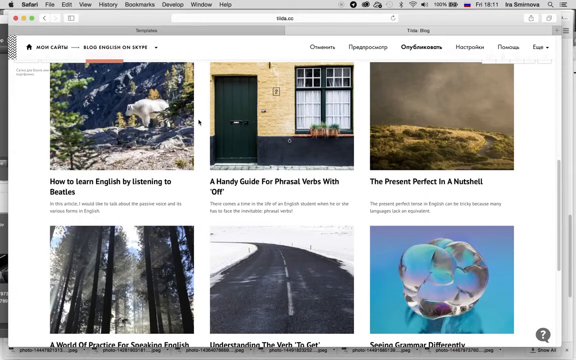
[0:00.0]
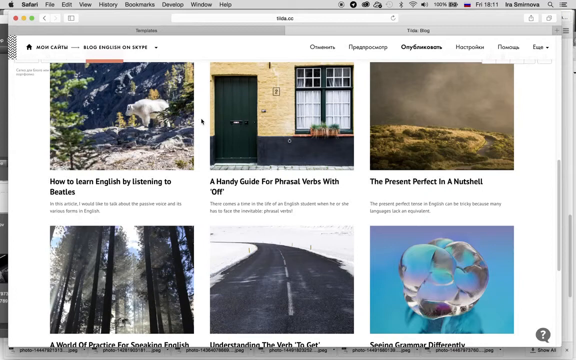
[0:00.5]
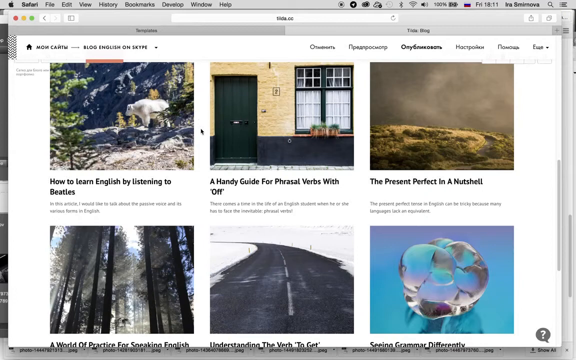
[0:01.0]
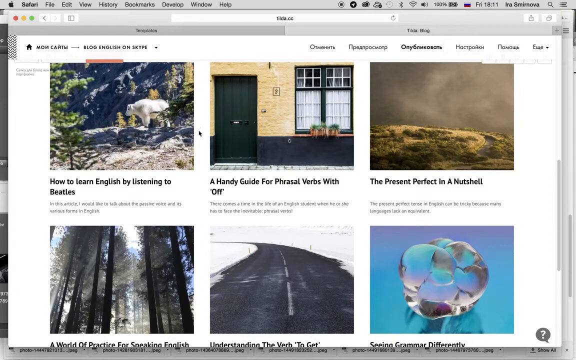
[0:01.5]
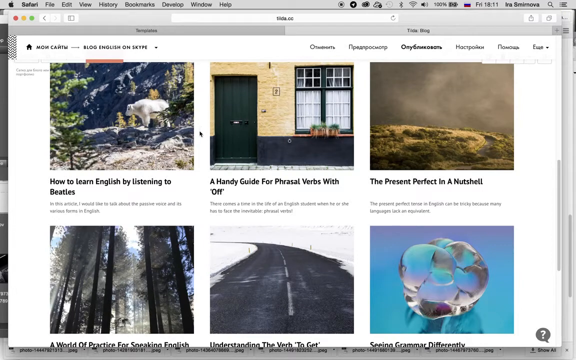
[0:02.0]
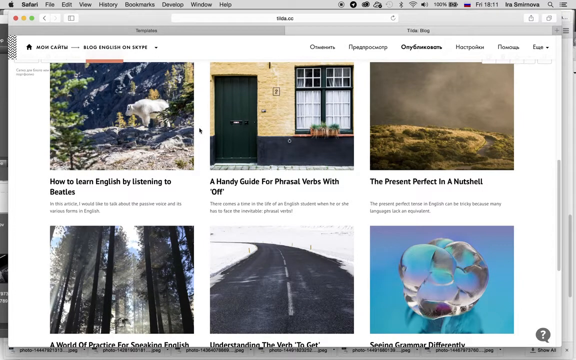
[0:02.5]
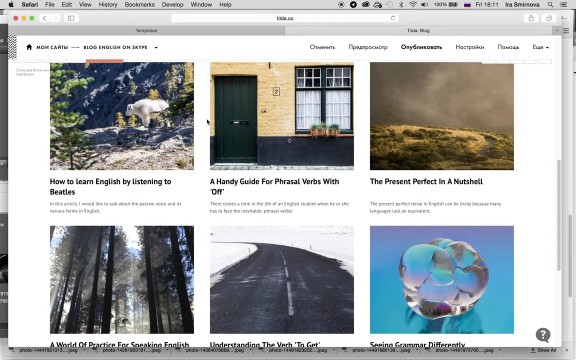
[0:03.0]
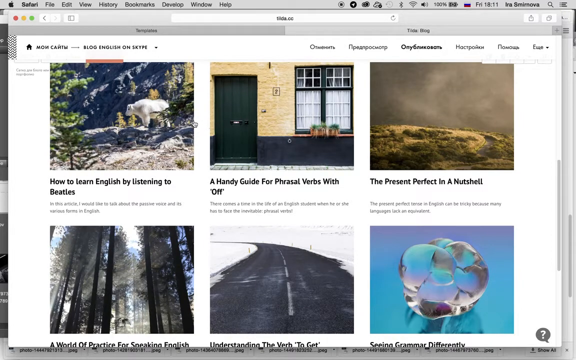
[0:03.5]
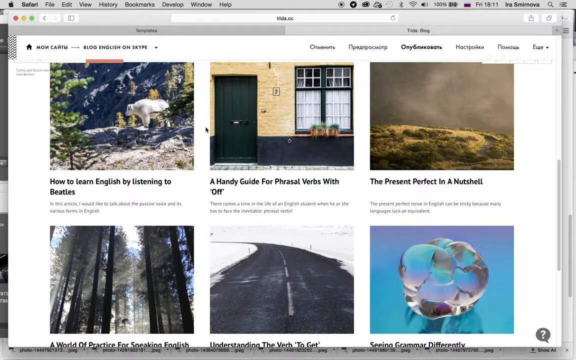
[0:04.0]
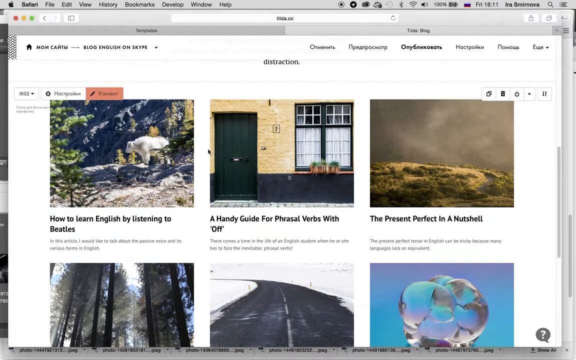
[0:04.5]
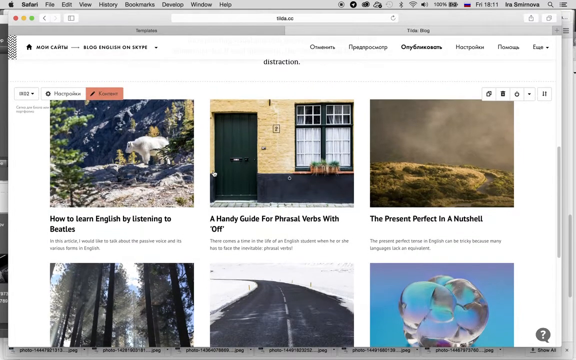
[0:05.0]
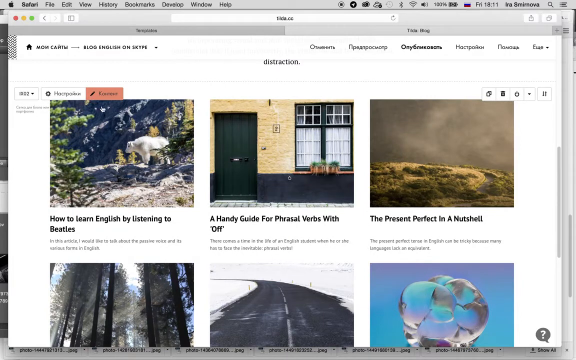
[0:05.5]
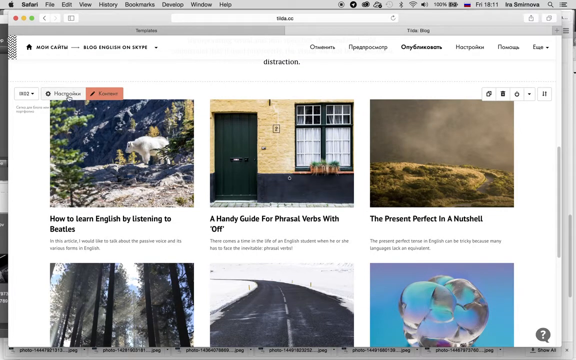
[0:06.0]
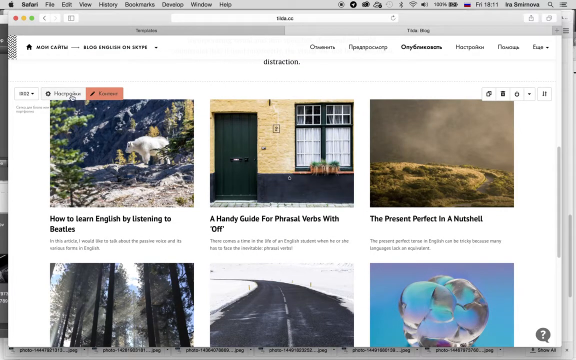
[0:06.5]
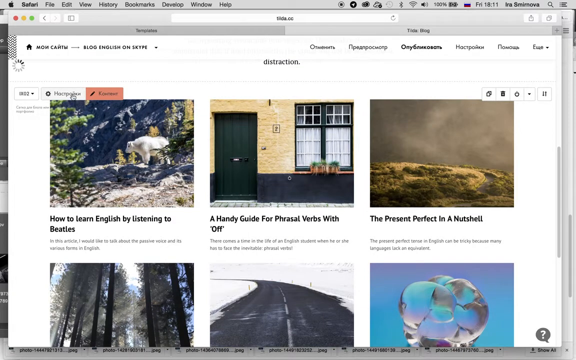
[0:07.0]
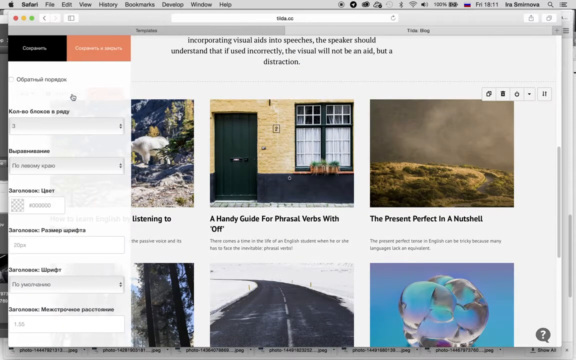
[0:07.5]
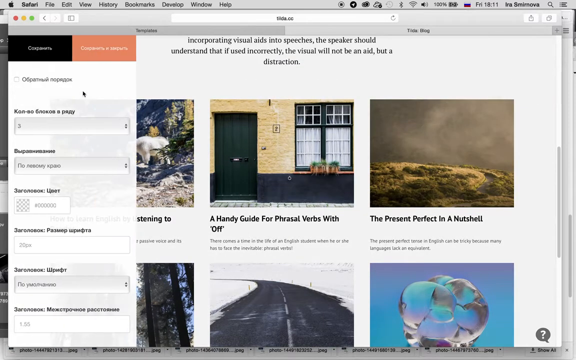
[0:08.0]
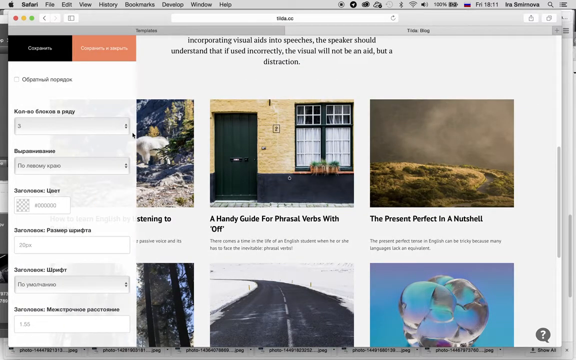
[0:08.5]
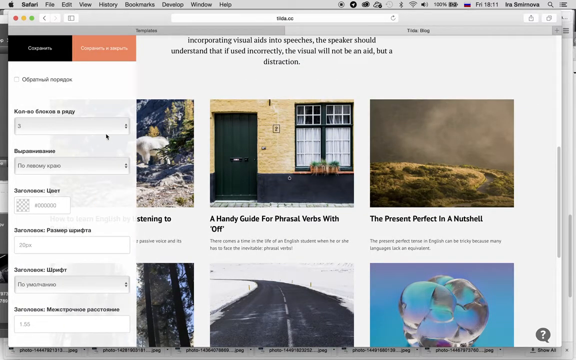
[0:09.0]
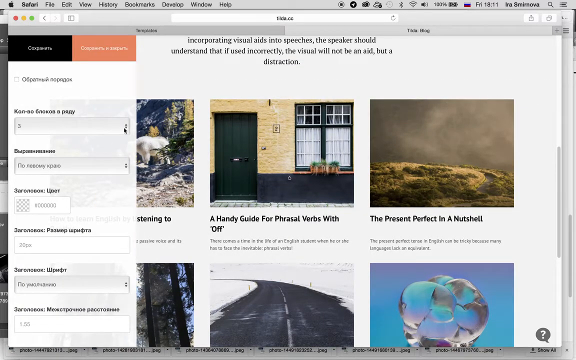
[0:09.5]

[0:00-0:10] The web page shows different topics. One reads "how to learn English by listening to Beatles", another "a handy guide for phrasal verbs with off", and another "the present perfect in a nutshell". The top of the page appears to say "blog, english, skype", and some Russian letters are visible. The "how to learn English by listening to Beatles" topic has a picture of what looks like either a white buffalo or some kind of white bovine standing on a mountain, with a few evergreen trees around it. The "a handy guide for phrasal verbs with off" topic shows what looks like possibly a residence in the UK, judging by the subtle characteristics of the house. It has a door in a kind of dark forest green, the same dark forest green on the bottom of the trim, and yellowish, golden-looking bricks.